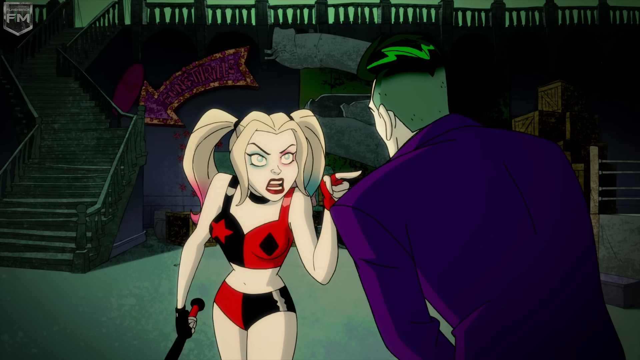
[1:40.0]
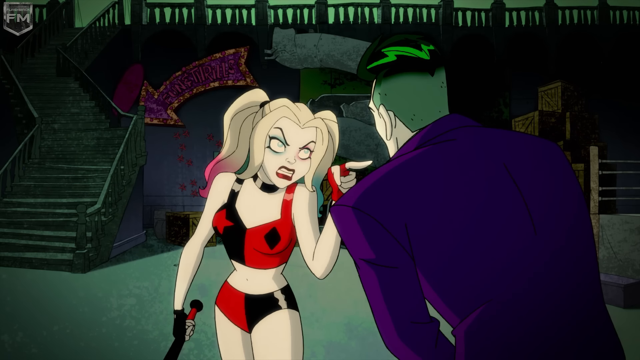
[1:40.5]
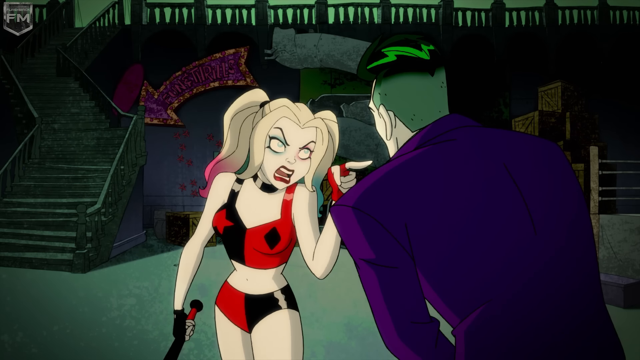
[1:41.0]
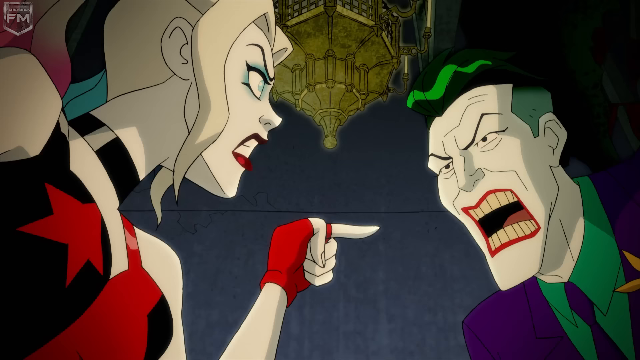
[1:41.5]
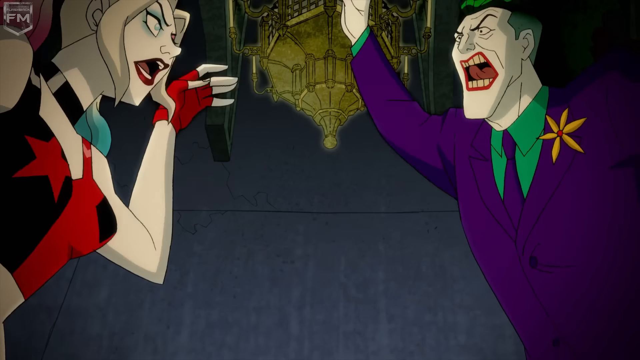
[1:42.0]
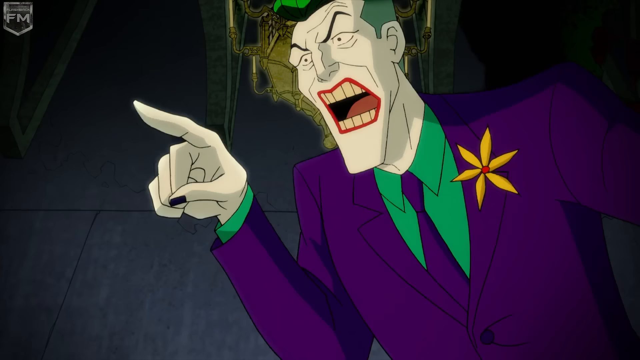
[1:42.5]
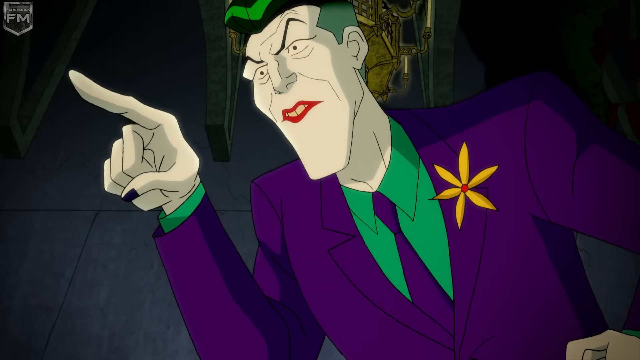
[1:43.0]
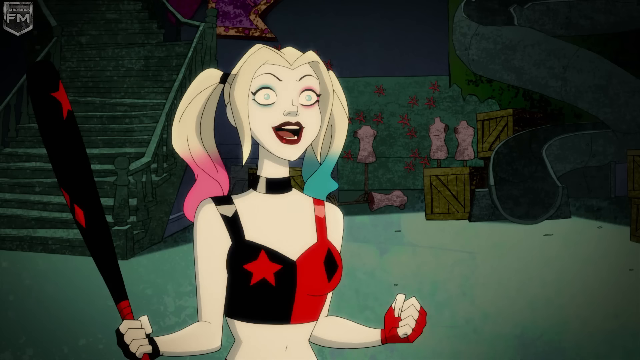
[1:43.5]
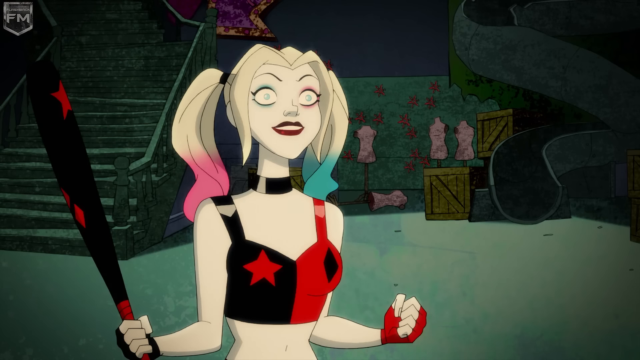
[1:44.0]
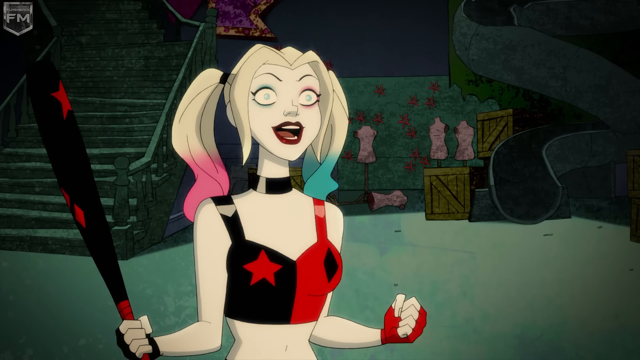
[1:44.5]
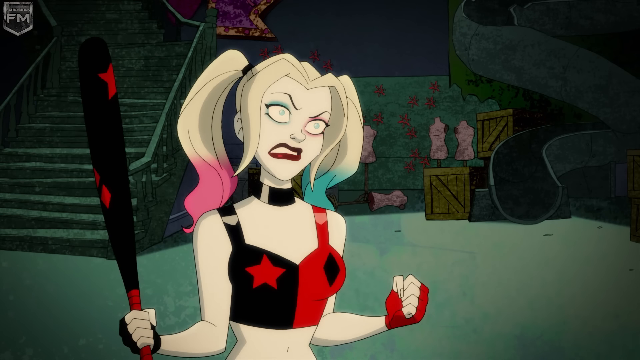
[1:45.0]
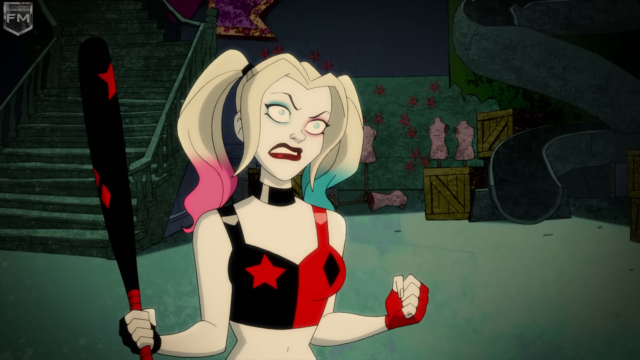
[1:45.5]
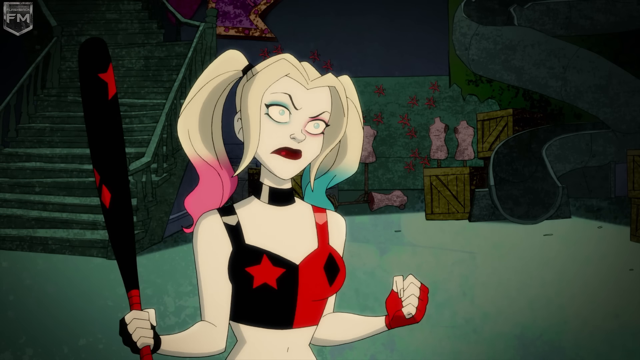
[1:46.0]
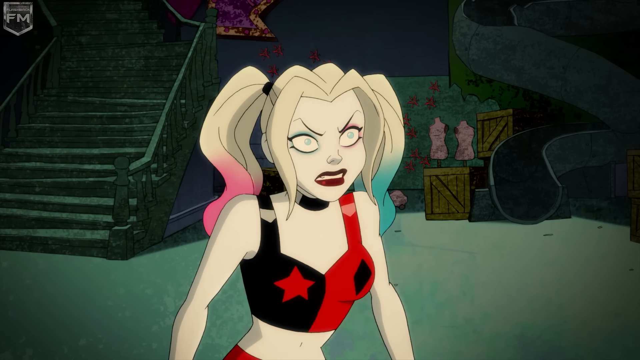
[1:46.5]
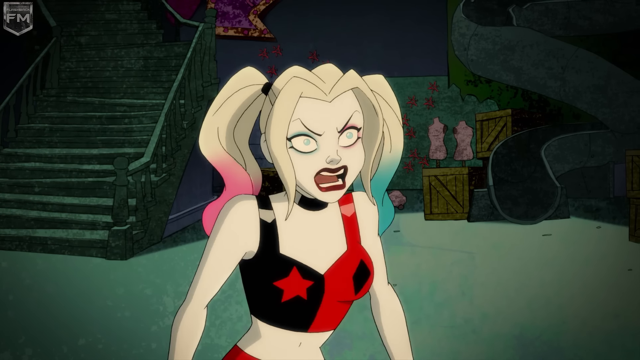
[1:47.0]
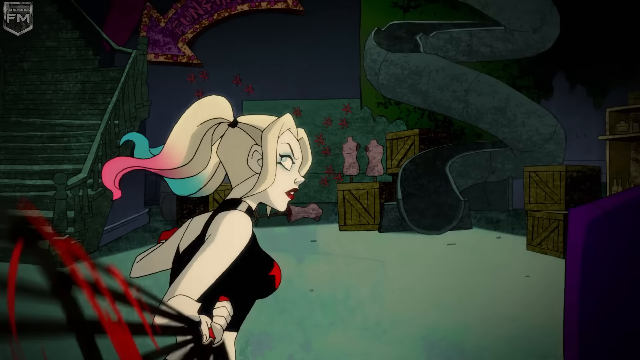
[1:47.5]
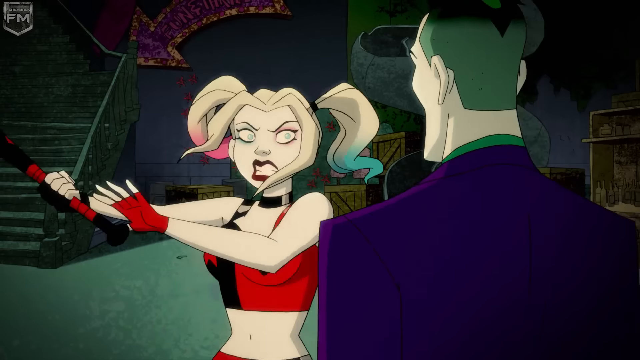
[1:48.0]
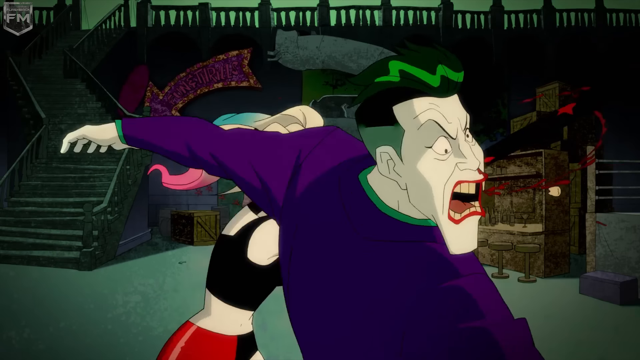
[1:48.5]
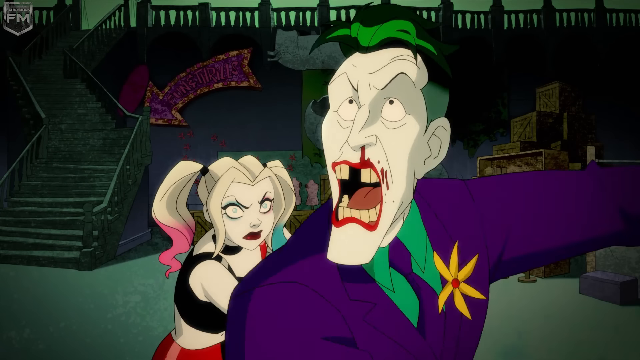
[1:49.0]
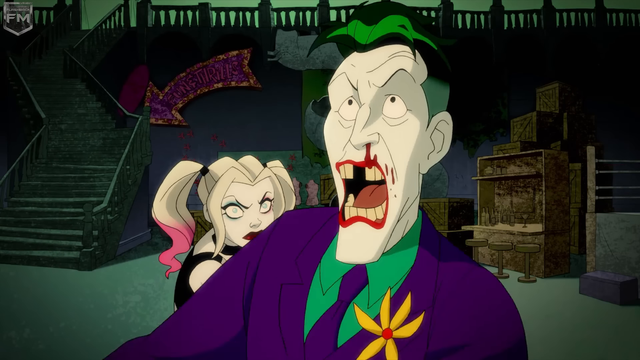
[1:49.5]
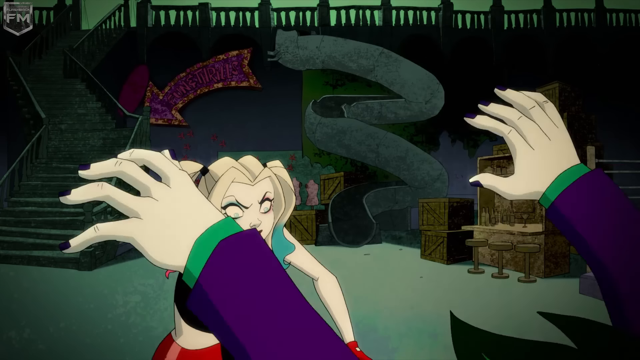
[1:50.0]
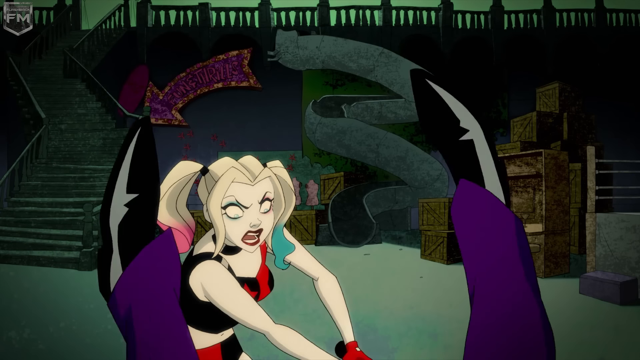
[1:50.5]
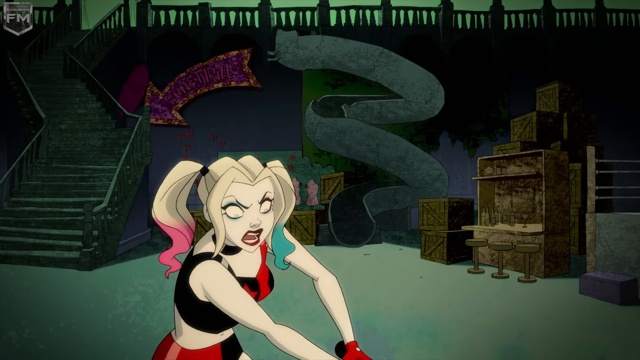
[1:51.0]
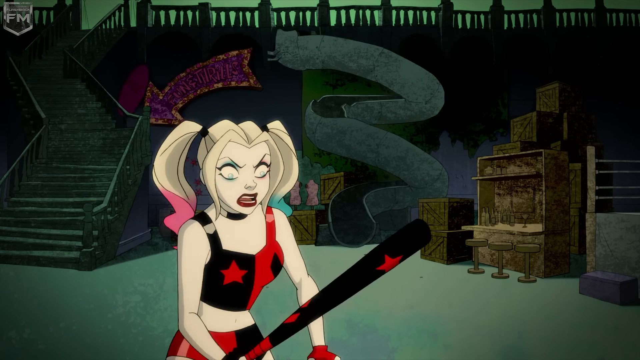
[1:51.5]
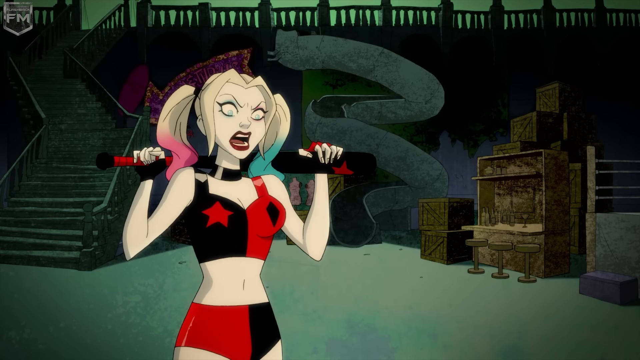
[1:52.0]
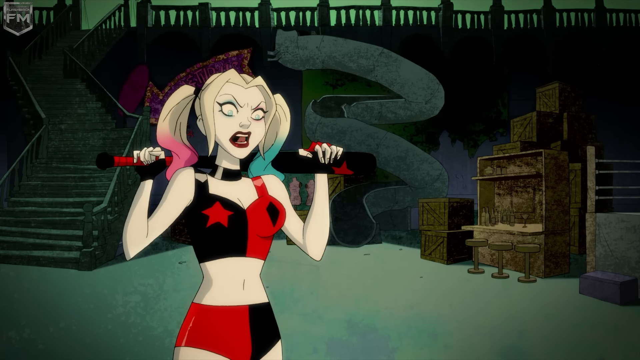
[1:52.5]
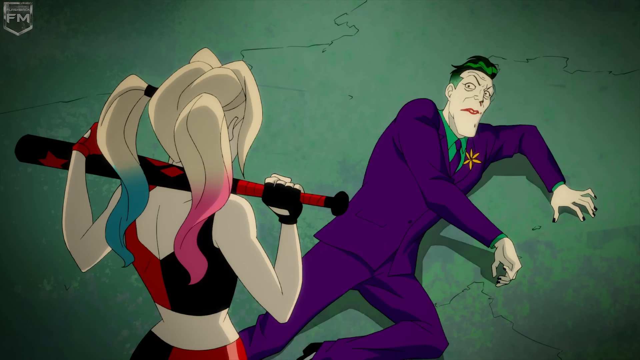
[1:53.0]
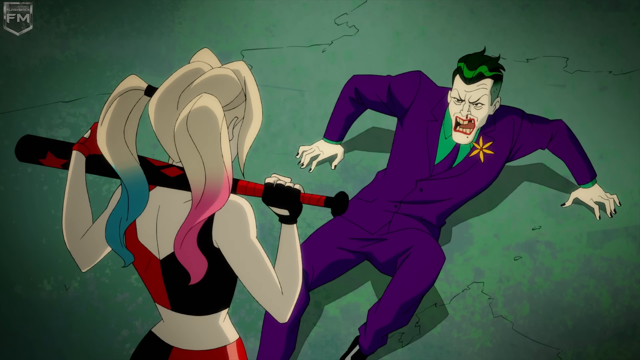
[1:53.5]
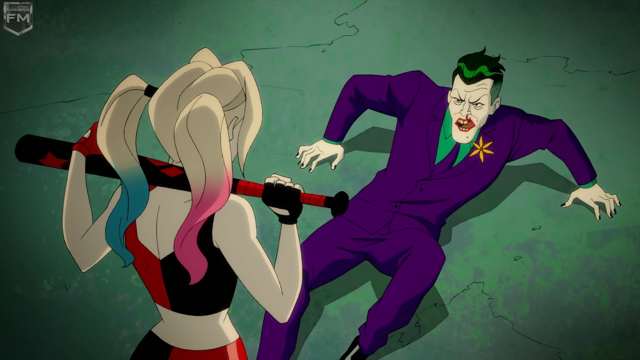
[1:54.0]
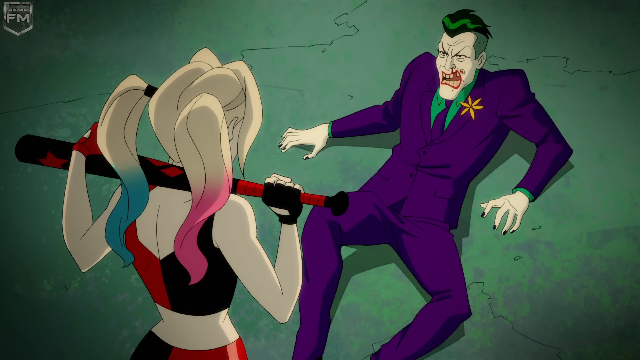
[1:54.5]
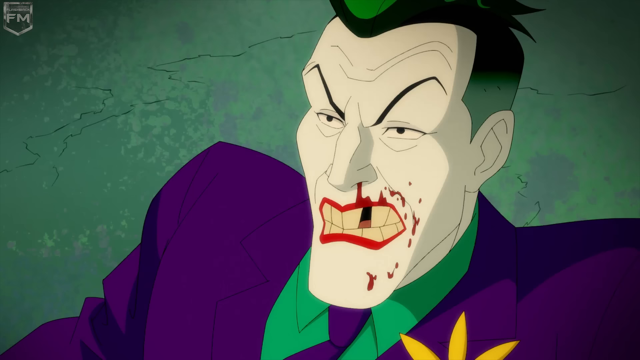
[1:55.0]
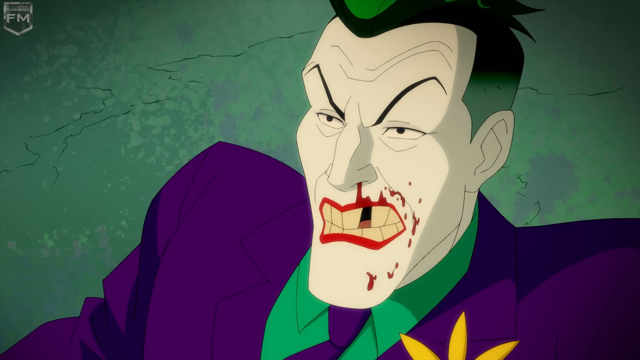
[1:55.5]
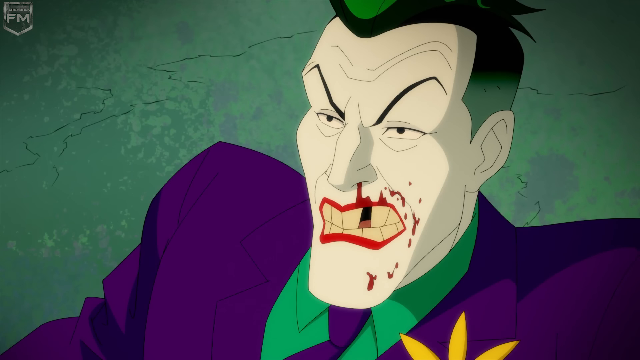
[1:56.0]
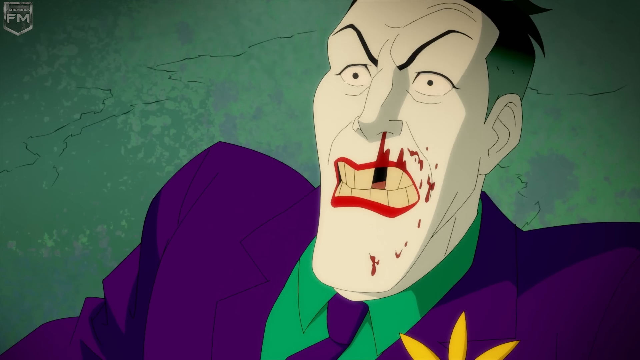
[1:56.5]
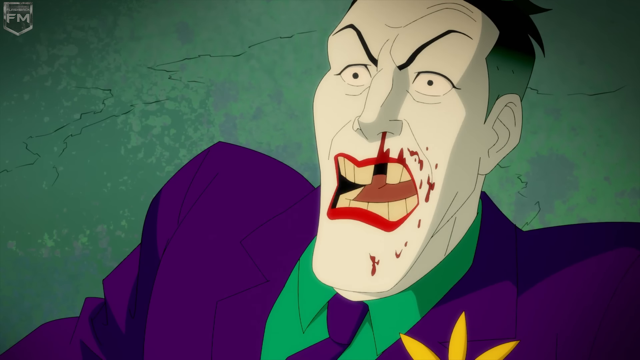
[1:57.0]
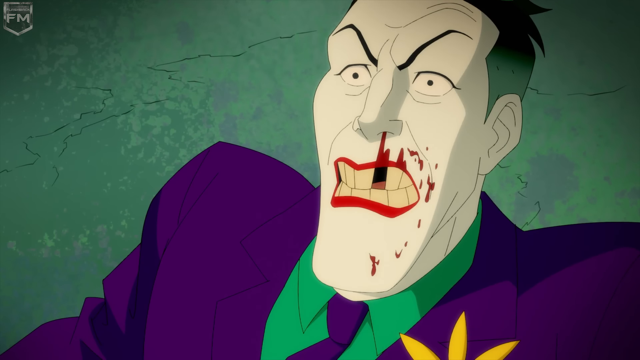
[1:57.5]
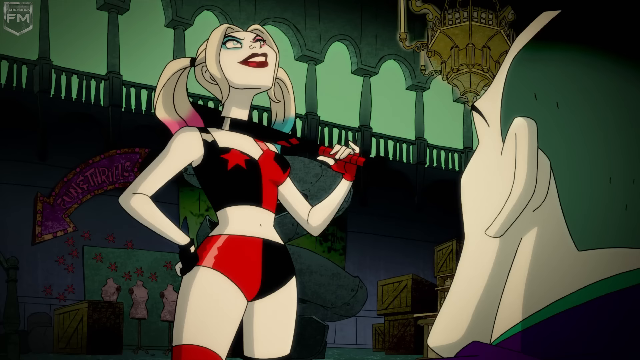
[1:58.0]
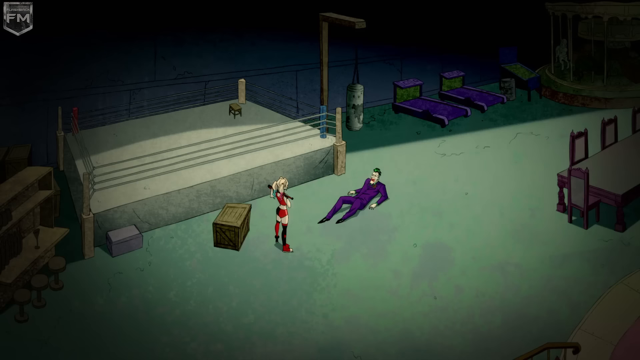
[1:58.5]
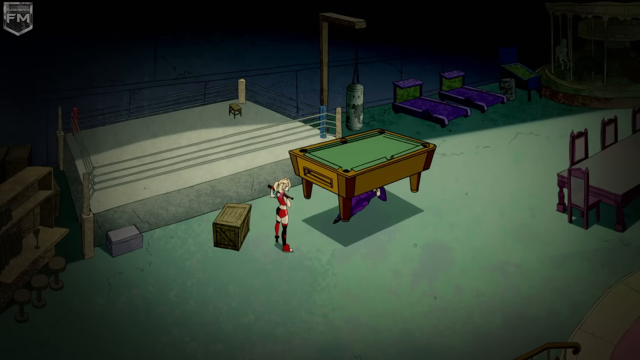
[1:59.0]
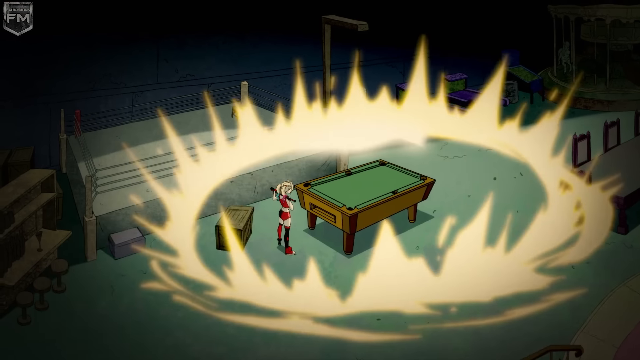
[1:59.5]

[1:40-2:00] In this cartoon animation, two characters are in a dingy-looking old warehouse room: a woman with blonde pigtails wearing a red and black outfit, holding a baseball bat in her hands, and a man with green hair wearing a purple suit. She points her finger at him, and they have a heated discussion, pointing fingers at each other. The woman lifts her arm, swings her baseball bat and hits the man around the face. The man has one of his teeth missing and blood coming from his nose. He falls down onto the floor, and the camera zooms in on his bloody face. The woman stands above him, and they both look up into the air. A snooker table appears from above and falls down on top of the man in the purple suit.